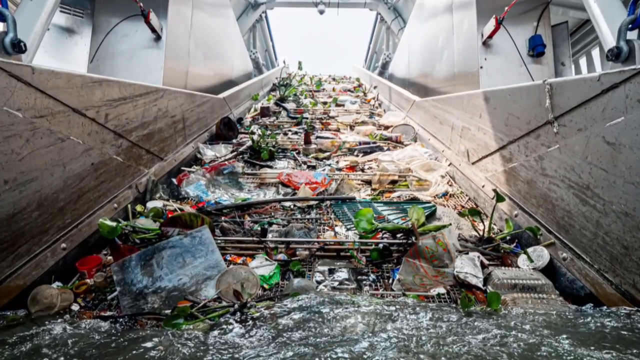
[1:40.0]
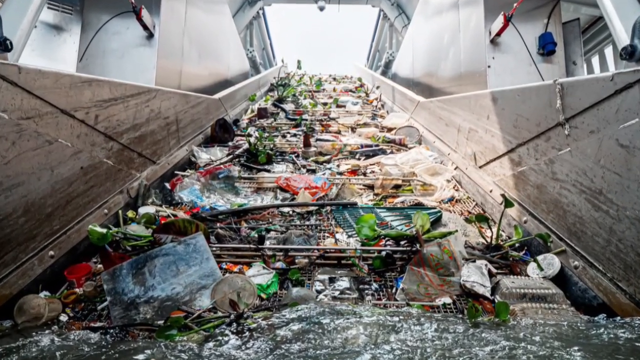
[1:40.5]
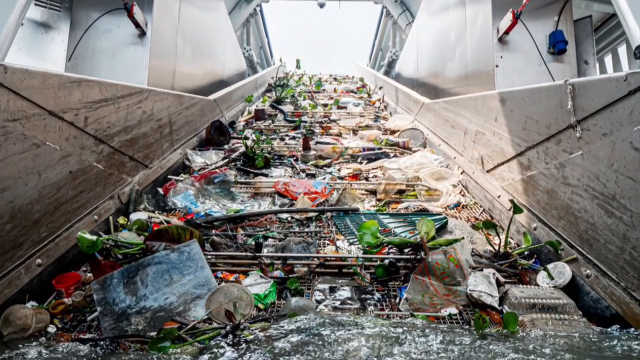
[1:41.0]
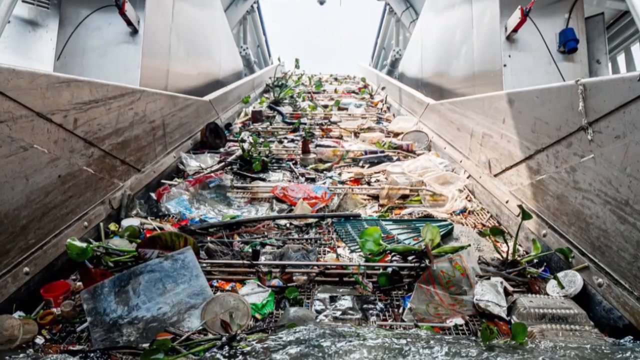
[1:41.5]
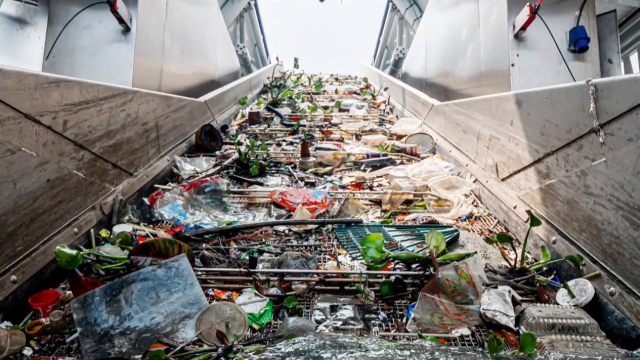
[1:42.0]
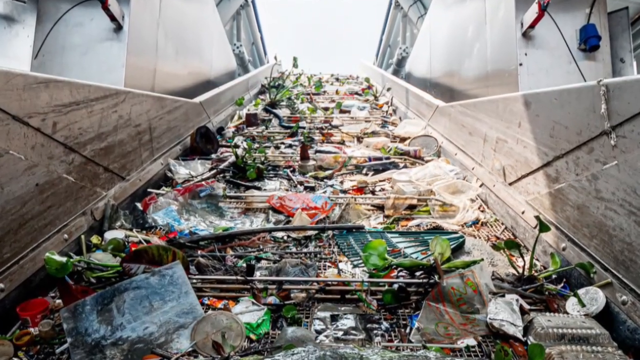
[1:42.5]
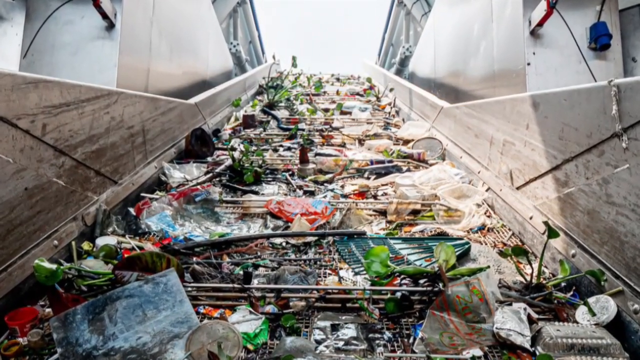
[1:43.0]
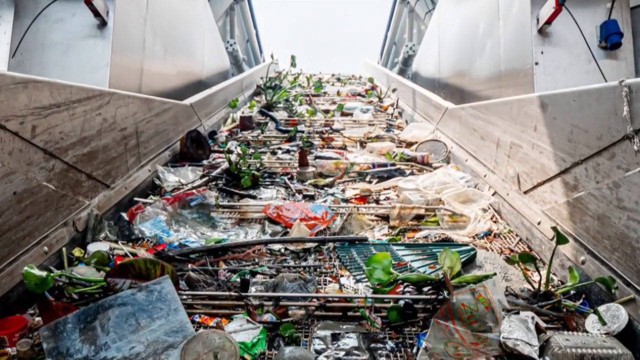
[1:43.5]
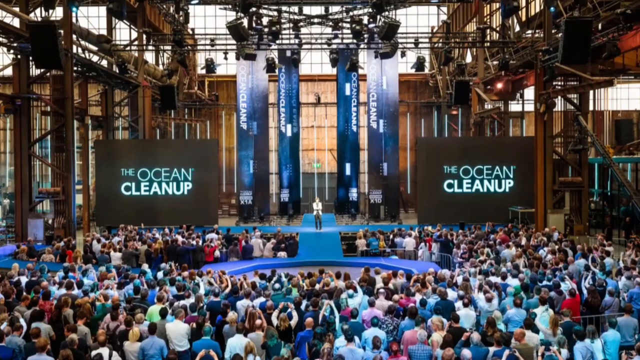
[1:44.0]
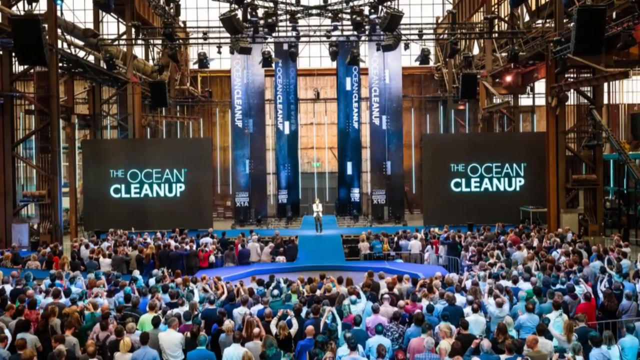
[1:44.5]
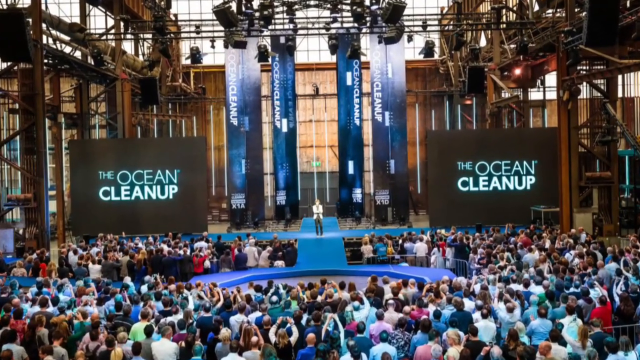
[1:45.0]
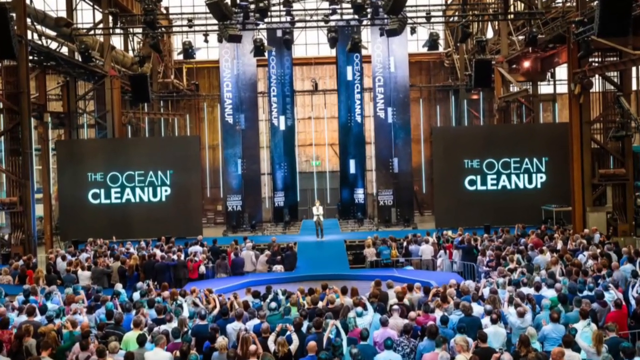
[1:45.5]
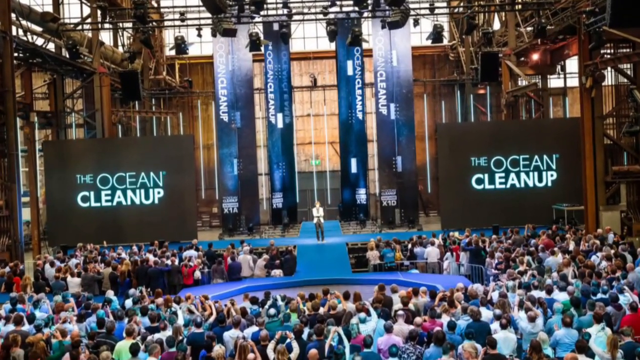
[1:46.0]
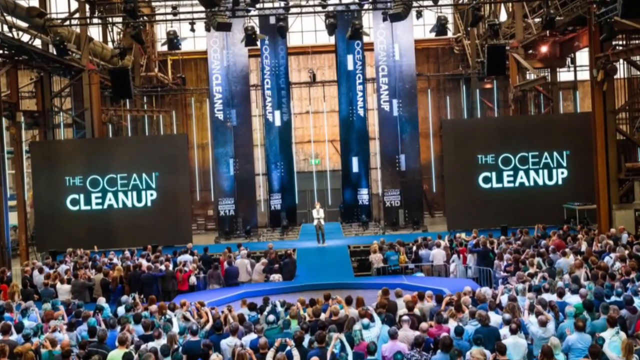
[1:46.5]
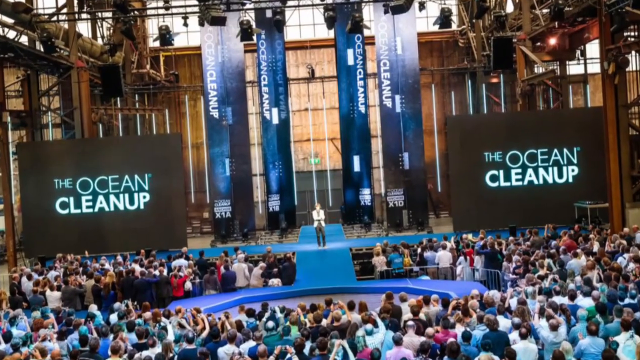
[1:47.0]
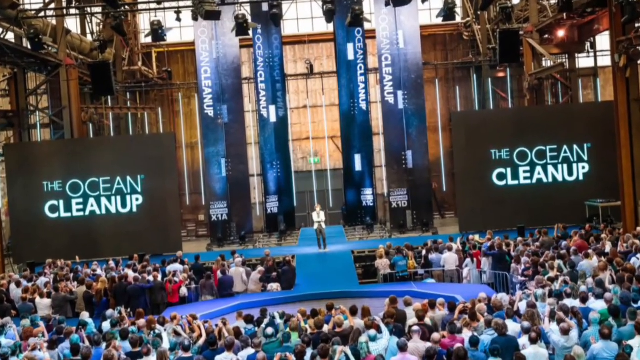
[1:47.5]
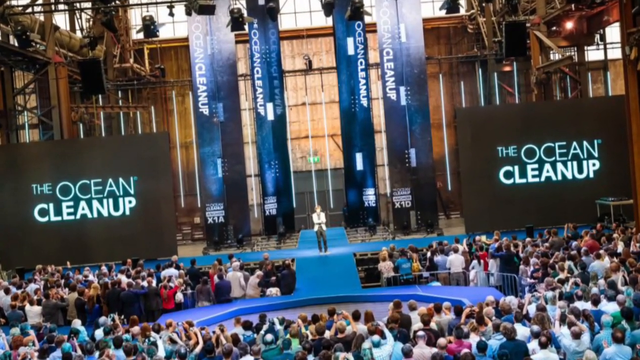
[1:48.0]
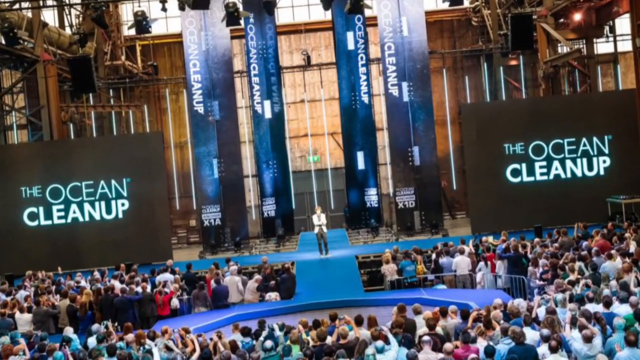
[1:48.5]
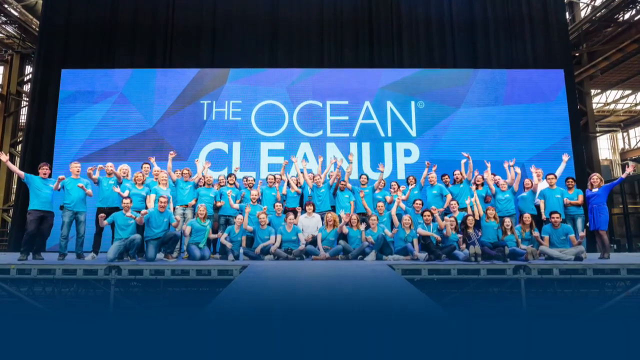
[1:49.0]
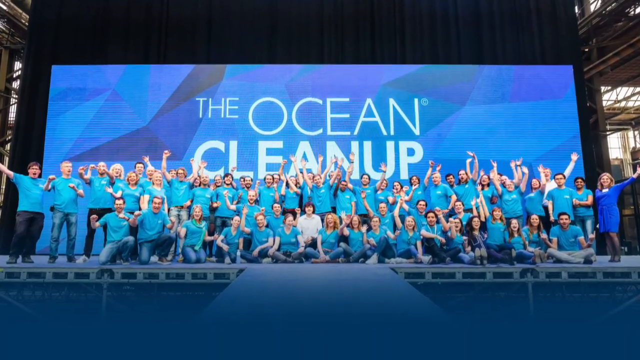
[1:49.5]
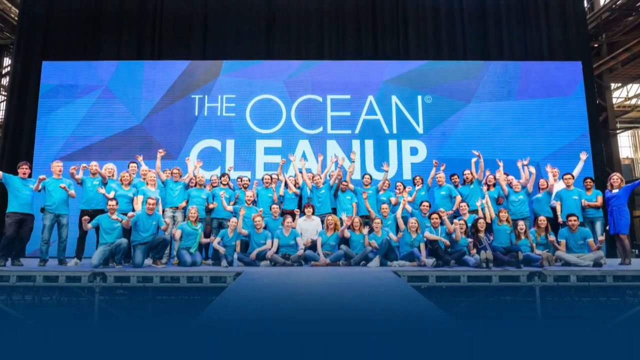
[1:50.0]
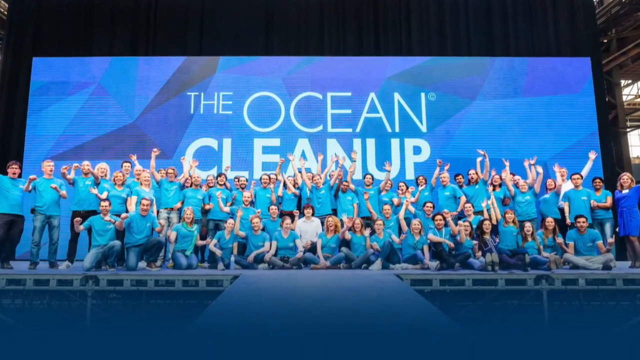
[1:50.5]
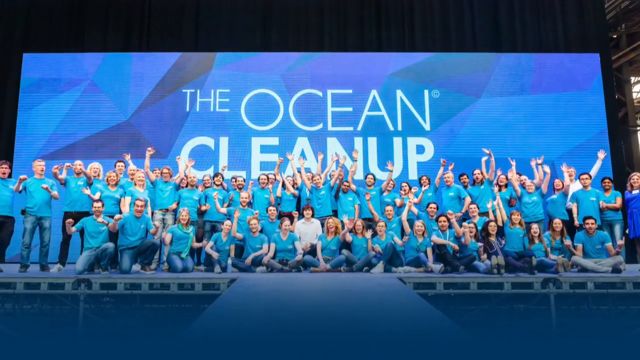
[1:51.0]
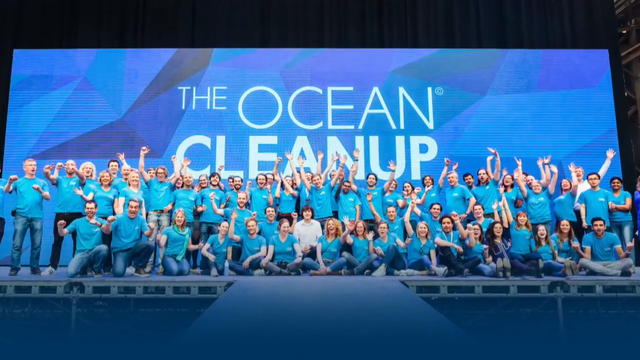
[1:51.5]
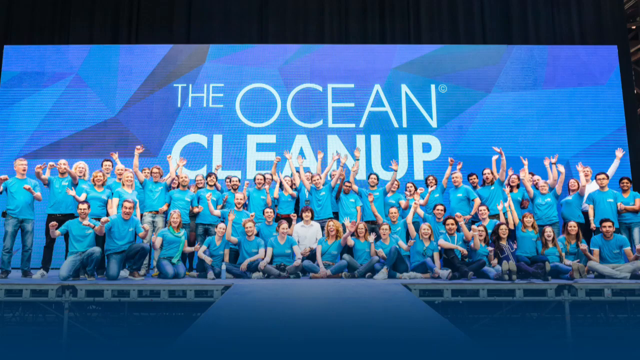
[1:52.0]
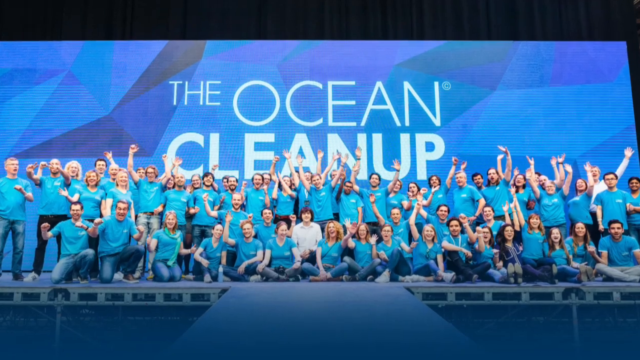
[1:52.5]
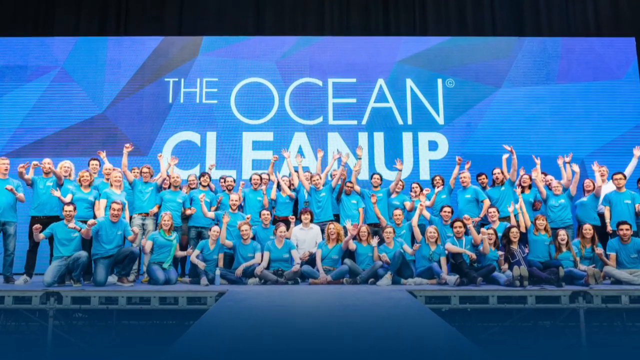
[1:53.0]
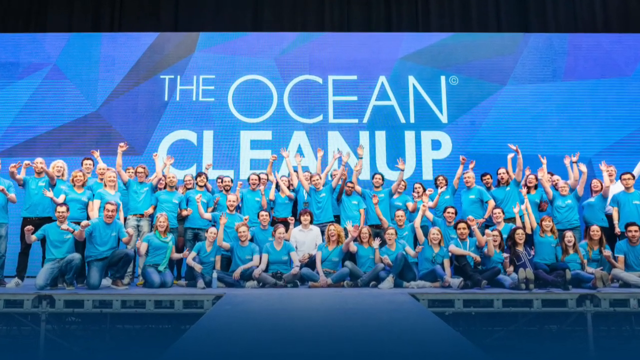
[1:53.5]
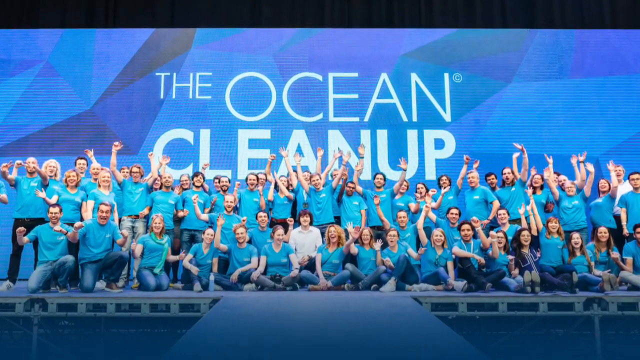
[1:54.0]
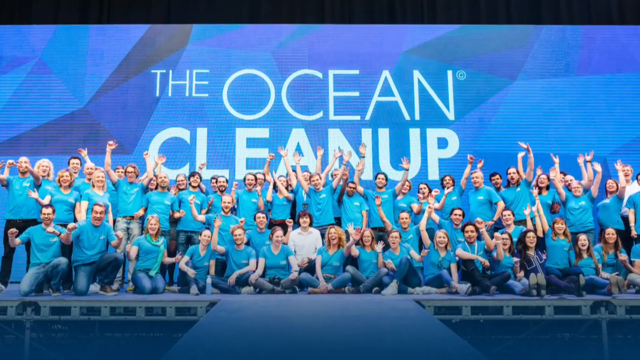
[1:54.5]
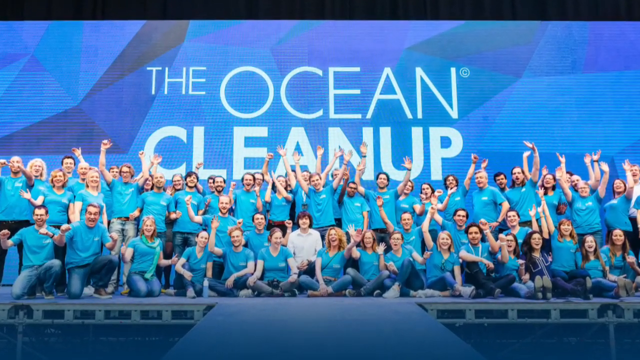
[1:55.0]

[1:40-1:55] The camera is in constant motion. Debris is piled in the boat in a long rectangular line. Next, the ocean cleanup workers appear; it looks like they have been out on a successful mission. They are all sitting around inside what looks like an outdoor auditorium, and it looks like they have gathered to celebrate their success. Lots of people stand around looking up toward a blue platform that is like a stage. On either side of the platform is a large black sign with "the ocean cleanup" written on it, one on the right side of the screen, and the same black square sign on the left side with "the ocean cleanup" written in turquoise. In the background, what looks like a tall, large, tan building is behind the stage area. There are four navy blue columns in the background, each with "the ocean cleanup" written in white.